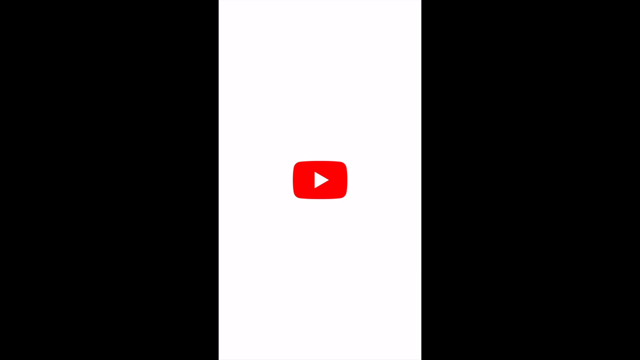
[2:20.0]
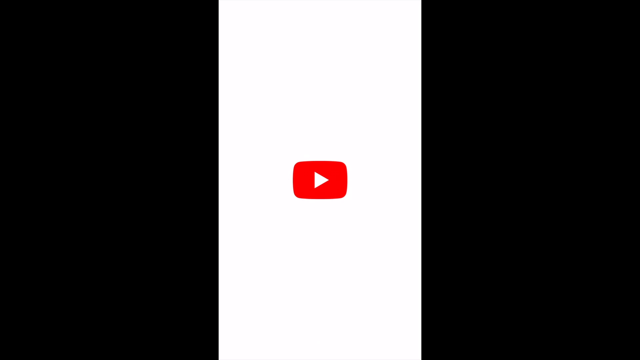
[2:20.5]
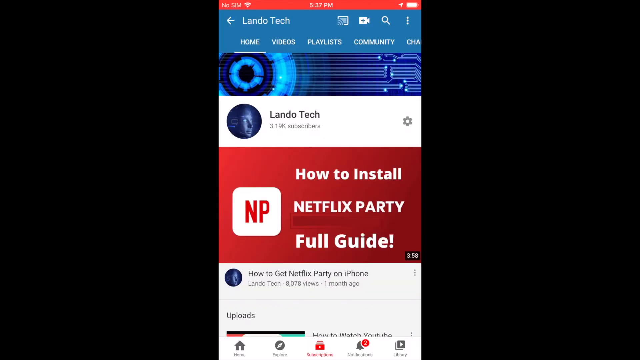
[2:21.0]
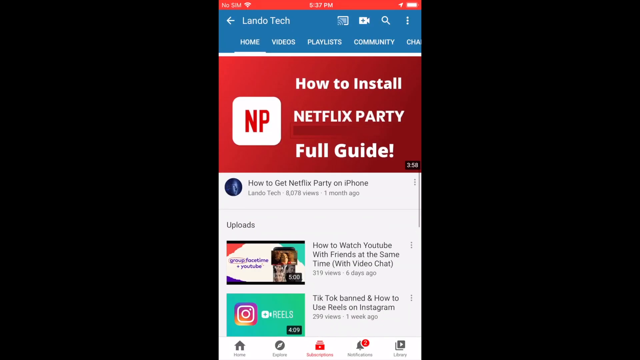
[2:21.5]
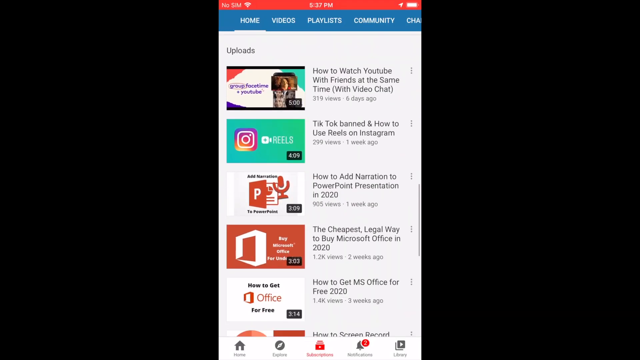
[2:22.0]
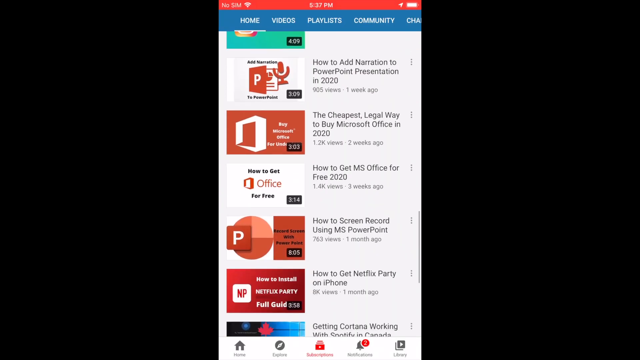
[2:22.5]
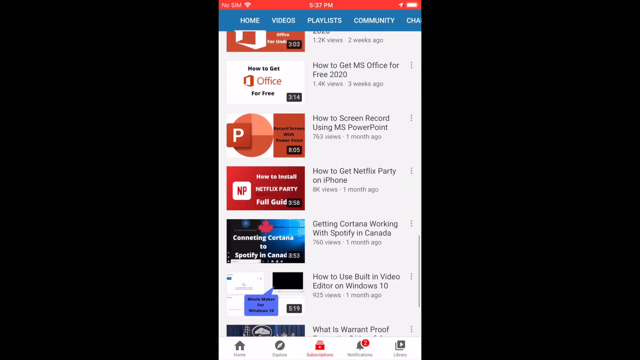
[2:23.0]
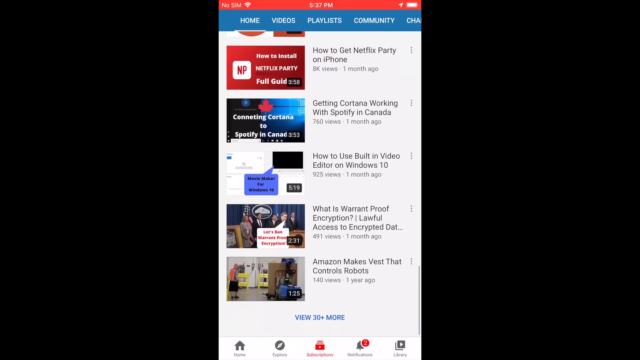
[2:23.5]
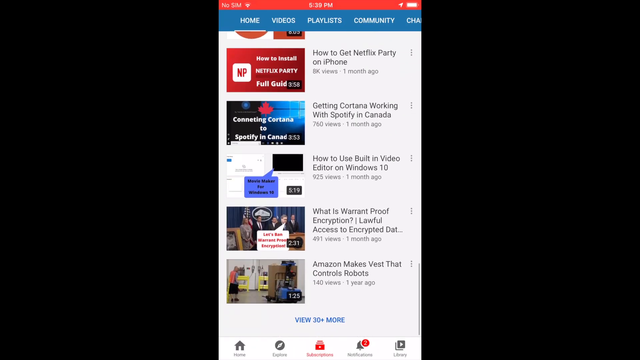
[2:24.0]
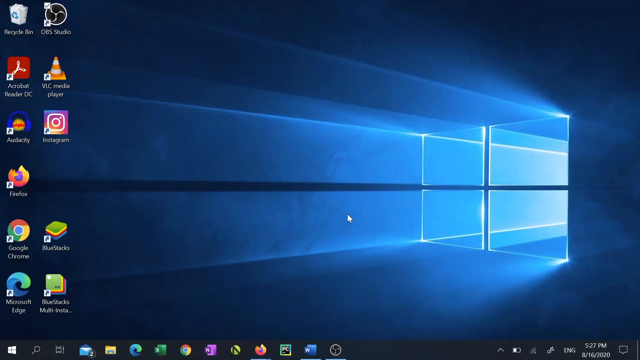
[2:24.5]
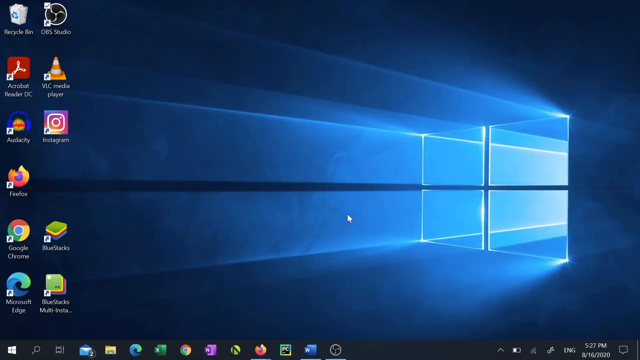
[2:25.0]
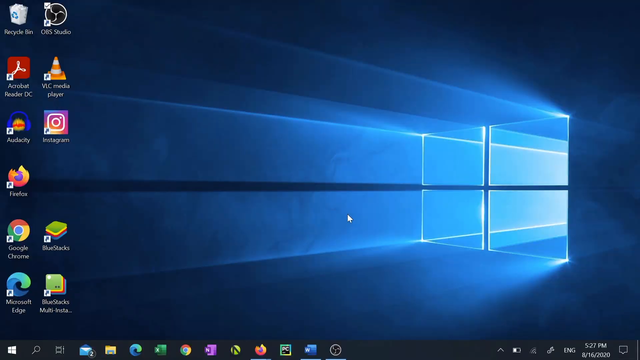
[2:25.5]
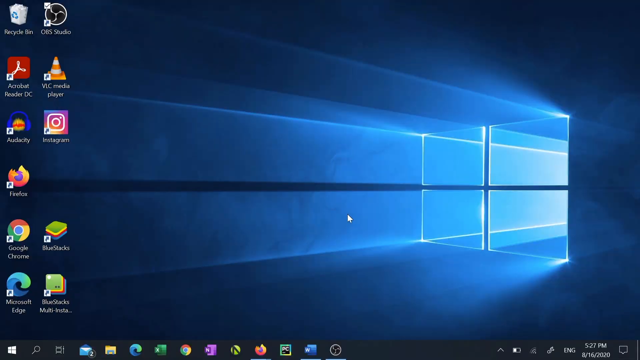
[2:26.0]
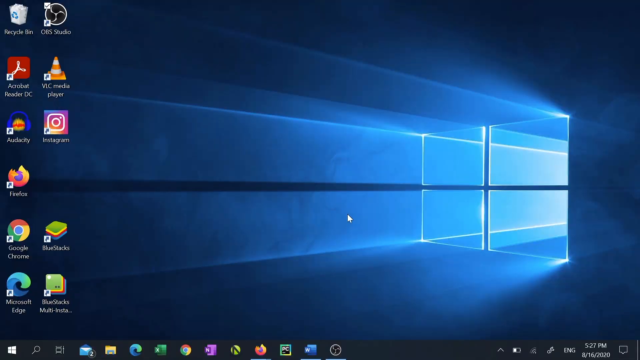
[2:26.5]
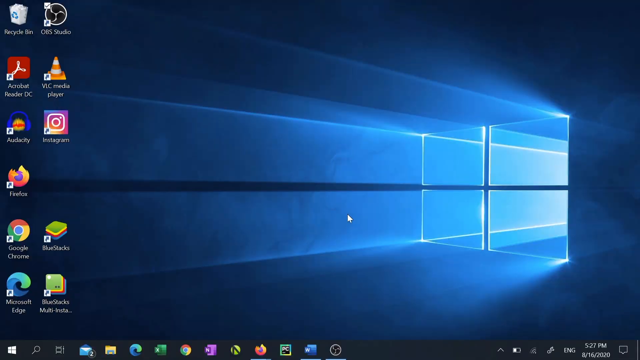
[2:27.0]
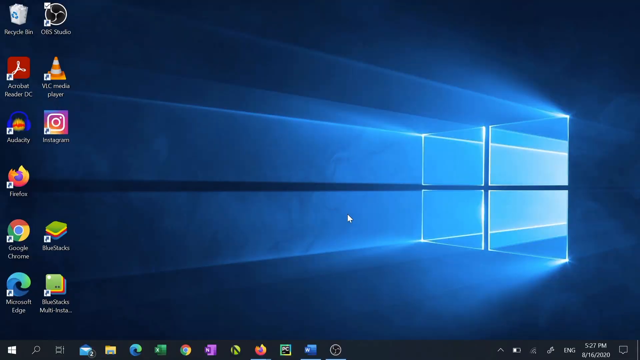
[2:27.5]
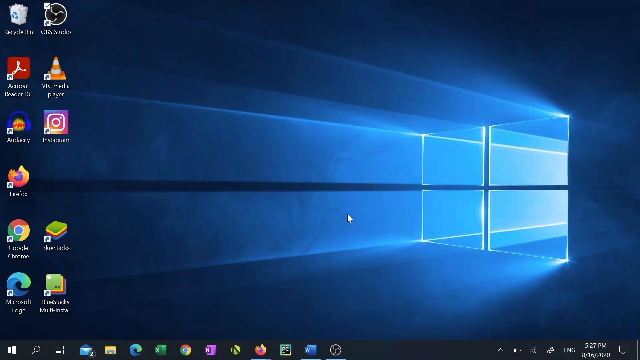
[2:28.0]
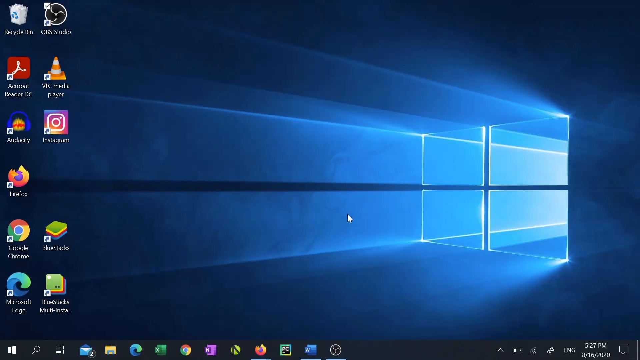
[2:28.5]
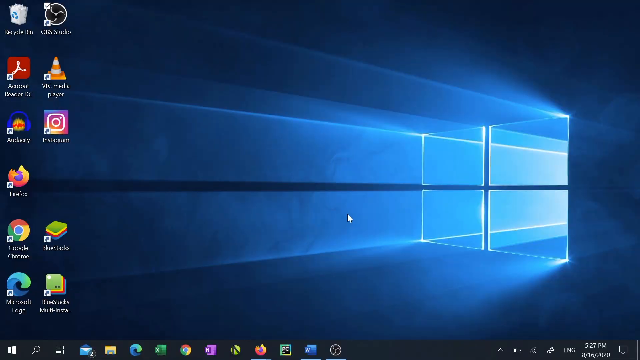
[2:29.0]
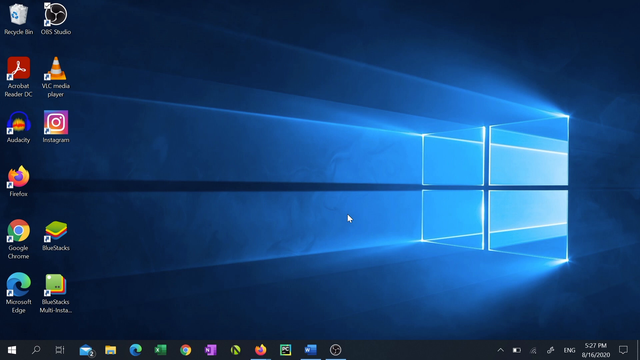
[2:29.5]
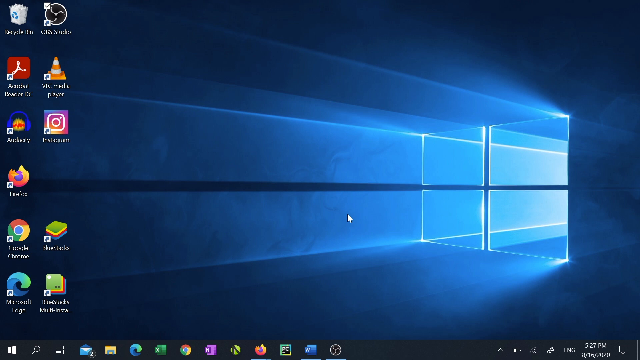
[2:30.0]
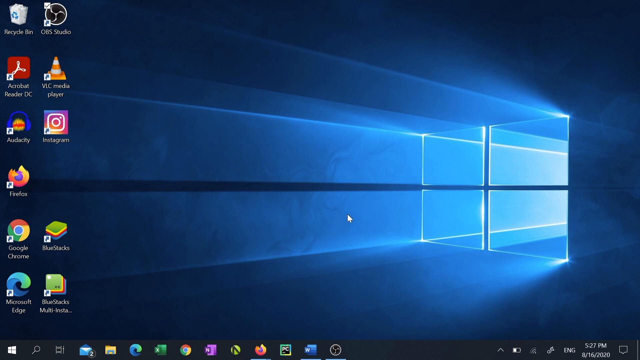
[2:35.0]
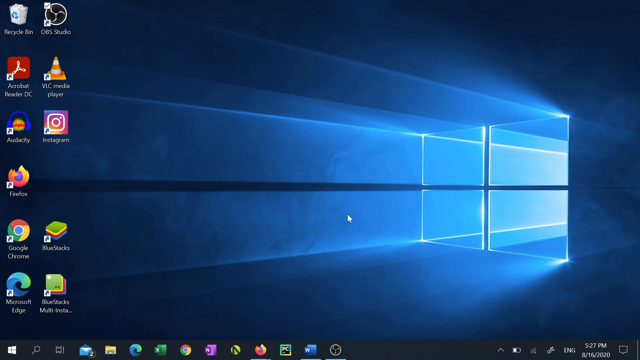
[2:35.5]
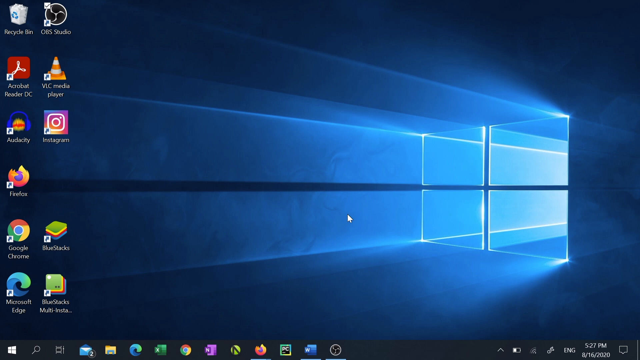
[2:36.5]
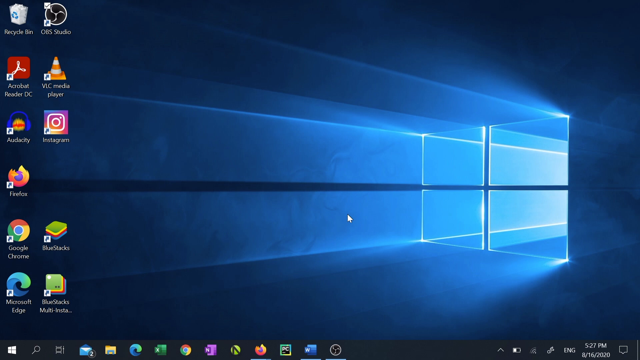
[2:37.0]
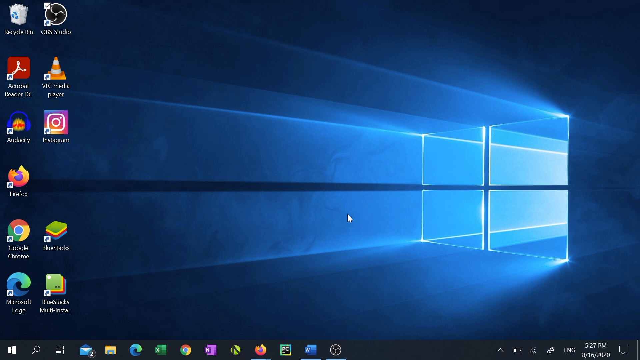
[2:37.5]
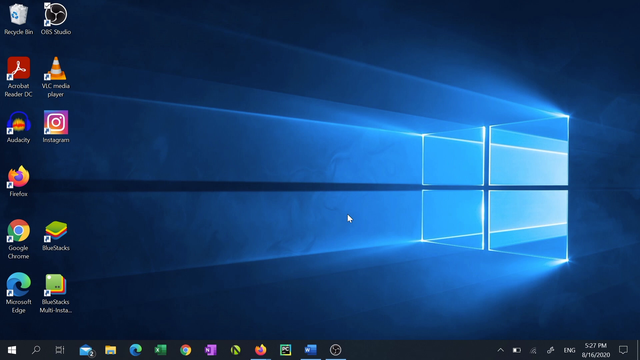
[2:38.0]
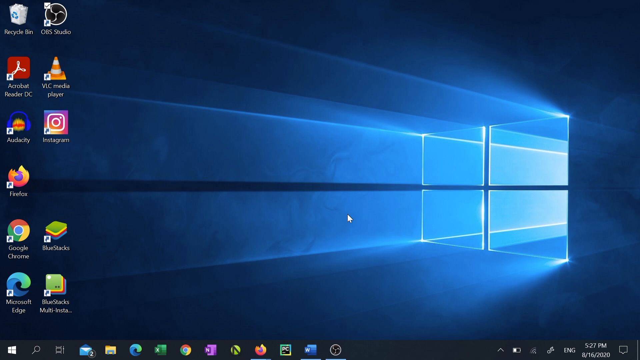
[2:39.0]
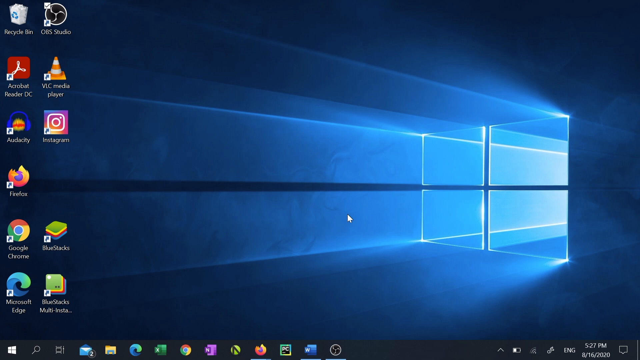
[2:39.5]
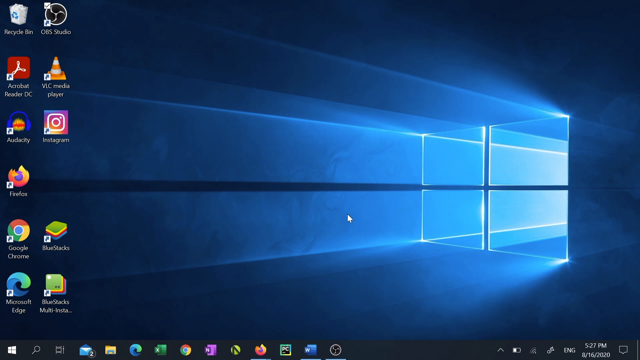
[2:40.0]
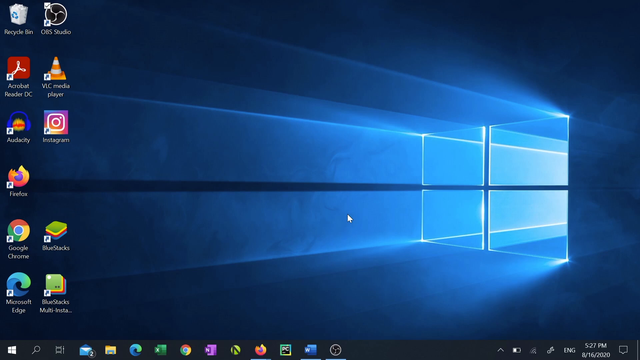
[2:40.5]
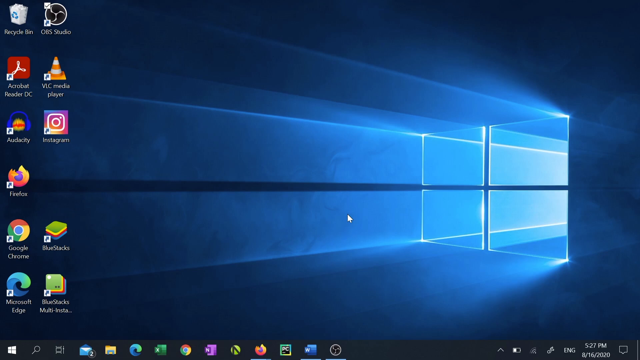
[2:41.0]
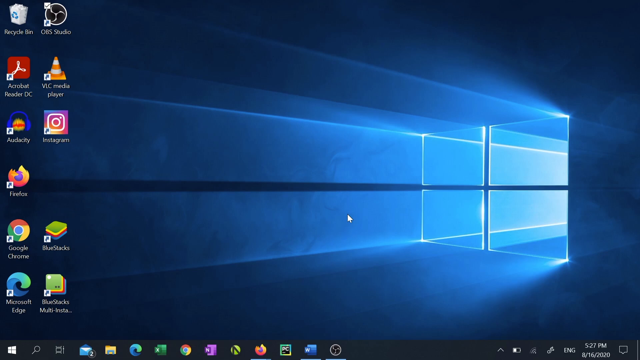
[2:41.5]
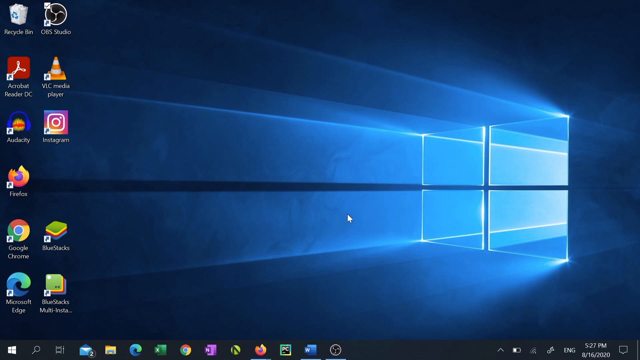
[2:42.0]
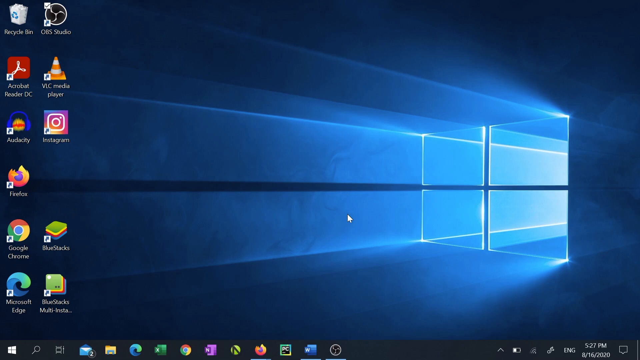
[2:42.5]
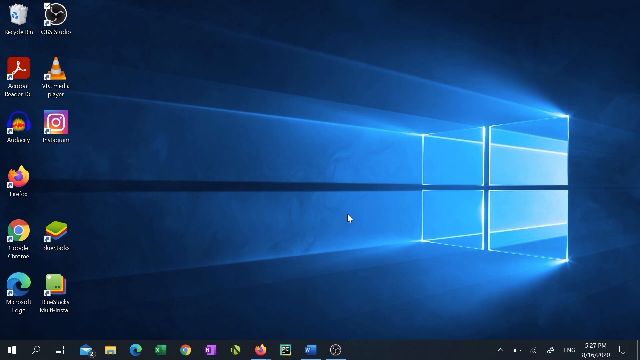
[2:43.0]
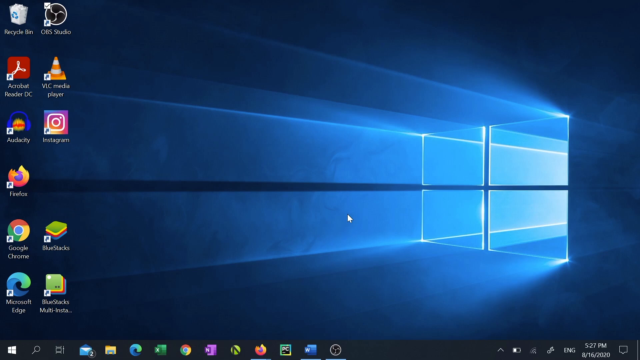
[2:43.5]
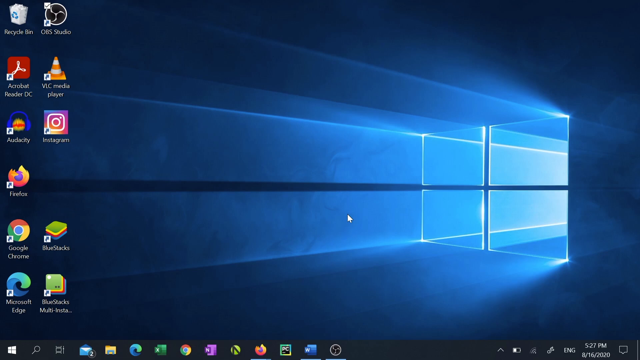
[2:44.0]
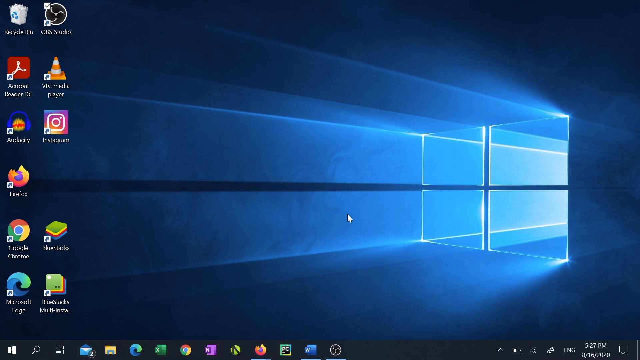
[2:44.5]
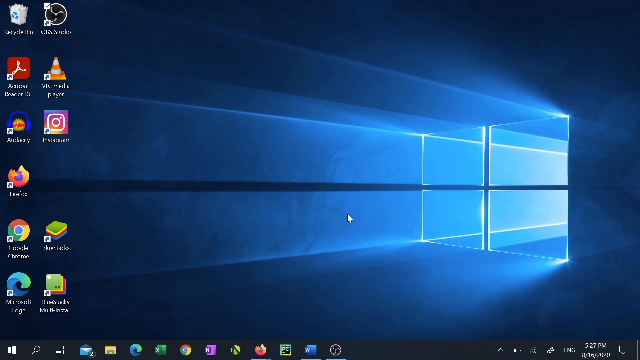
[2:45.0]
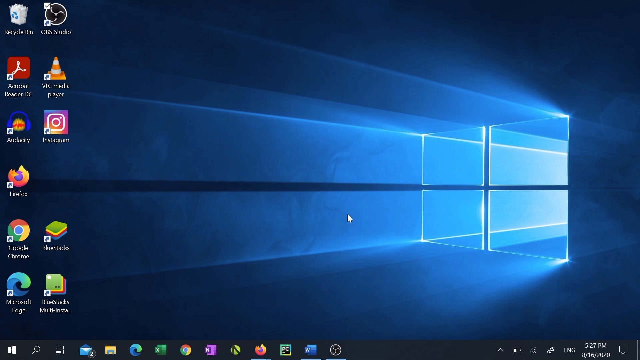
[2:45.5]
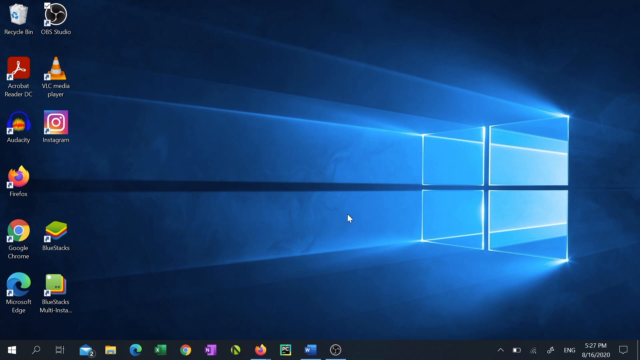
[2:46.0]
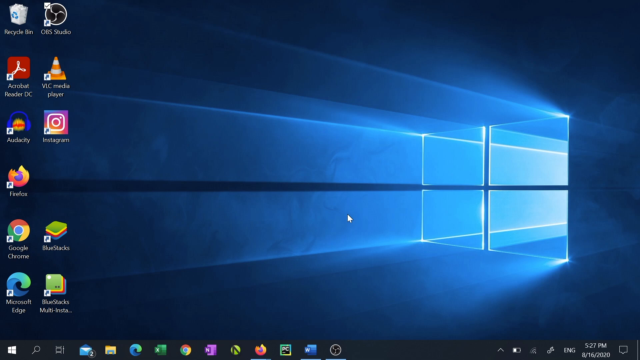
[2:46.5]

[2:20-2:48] A blank screen shows the YouTube symbol in the center, a red rectangle with rounded edges and a white play button. The screen changes to a YouTube page with "LandoTech" at the very top, a back button, and at the top right a share button, a record button and a magnifying glass. Categories underneath read "home", "videos", "playlists", "community", followed by "LandoTech" and "3.19k subscribers", with a gear on the right side. In the center it says "how to install Netflix party full guide". A person scrolls down through the YouTube feed on their phone past many videos until reaching the bottom. Suddenly the screen changes to the Windows home screen: the four-paned window on the right side with light shining through it, many startup icons on the left, pinned icons along the bottom, the date and time in the bottom right, and in the bottom left corner a Windows icon with a magnifying glass to its right. A white mouse cursor just sits on the screen while nothing really happens.